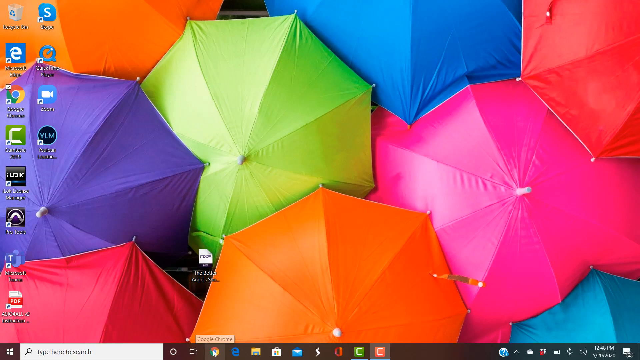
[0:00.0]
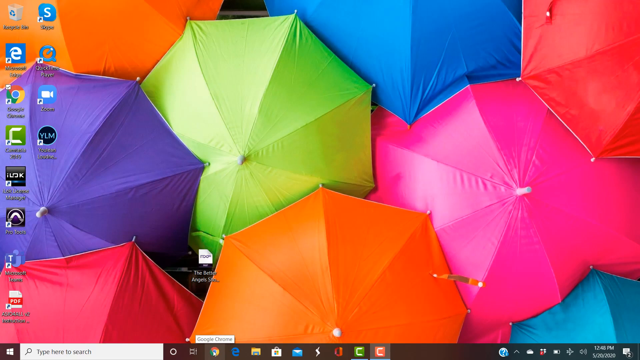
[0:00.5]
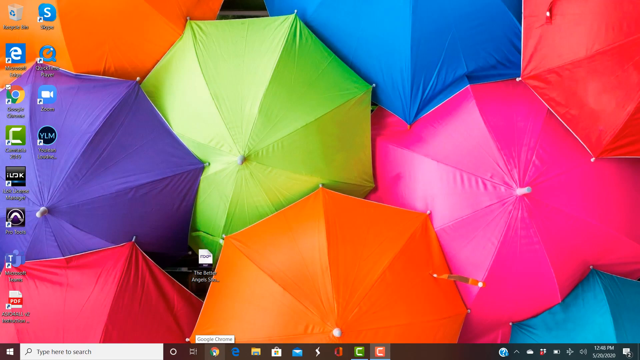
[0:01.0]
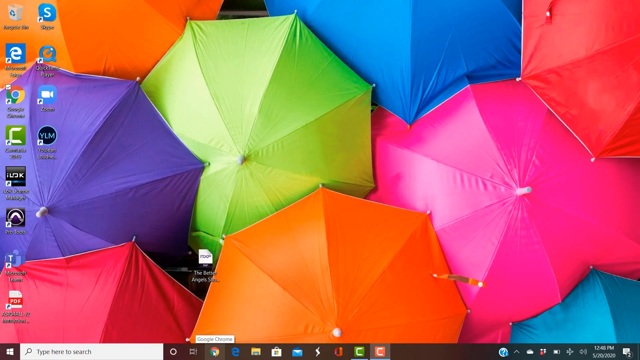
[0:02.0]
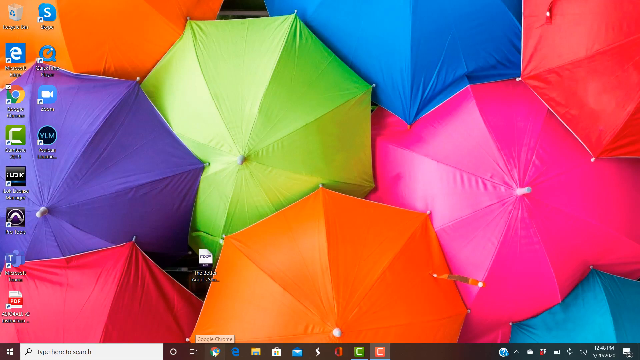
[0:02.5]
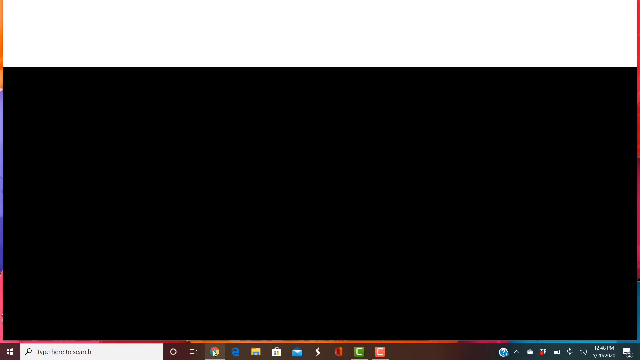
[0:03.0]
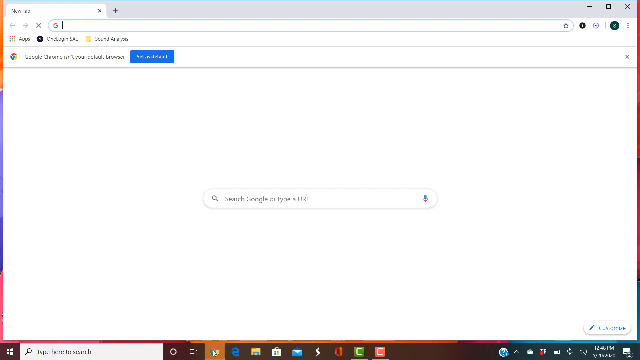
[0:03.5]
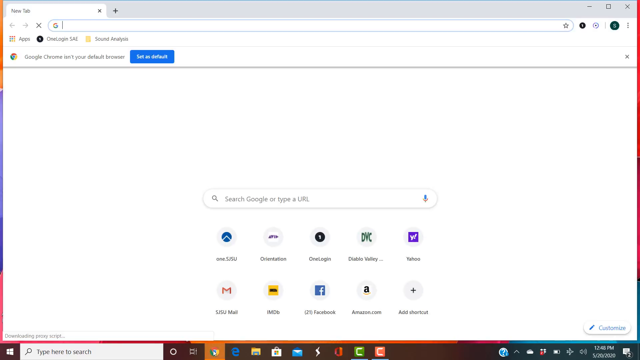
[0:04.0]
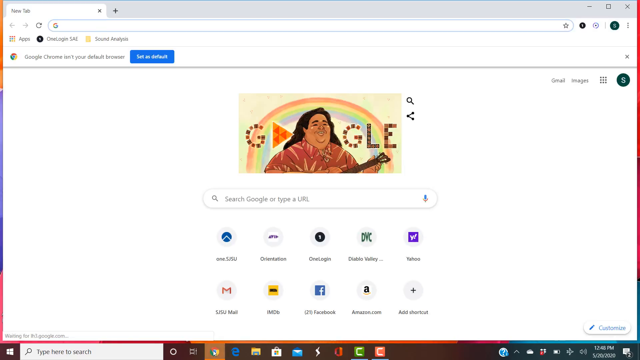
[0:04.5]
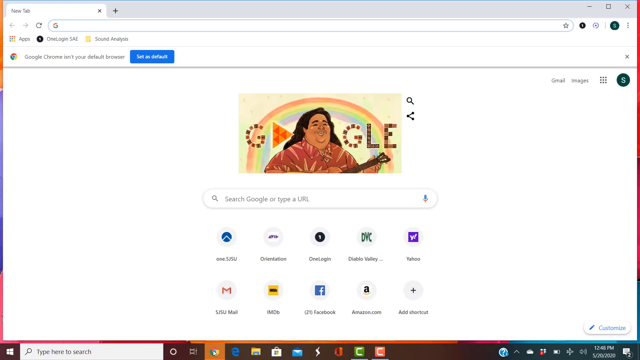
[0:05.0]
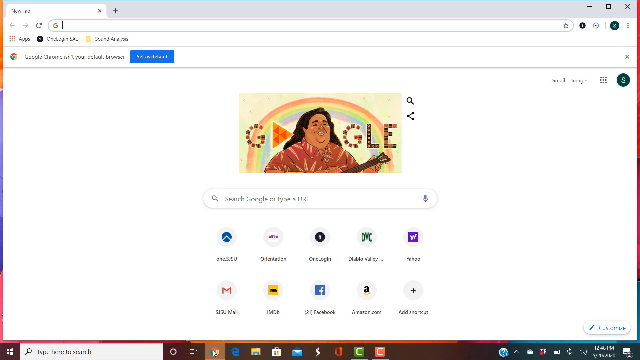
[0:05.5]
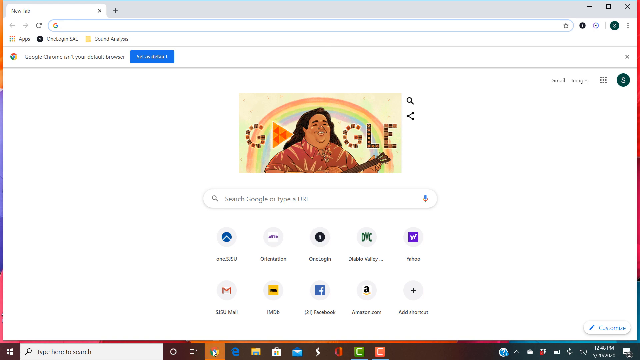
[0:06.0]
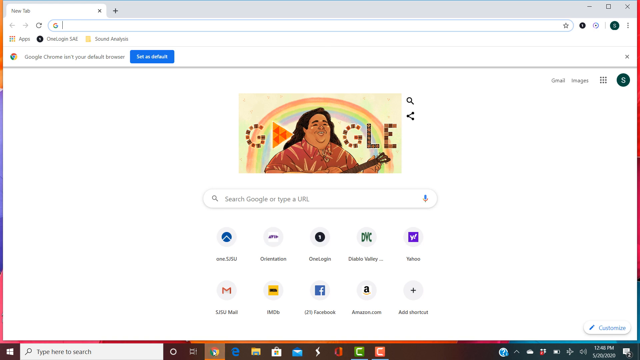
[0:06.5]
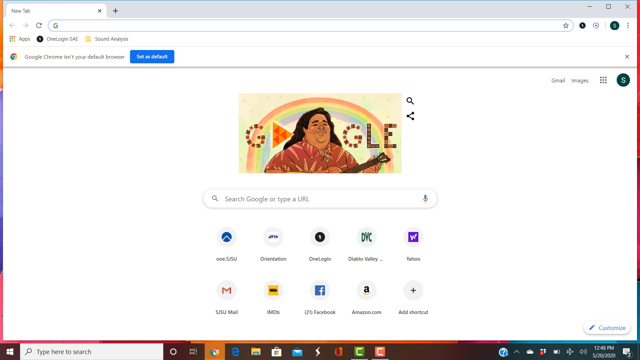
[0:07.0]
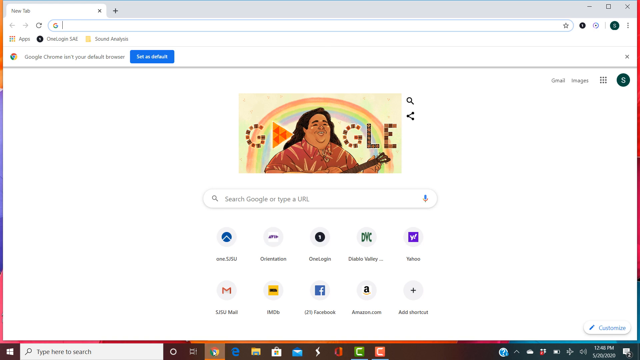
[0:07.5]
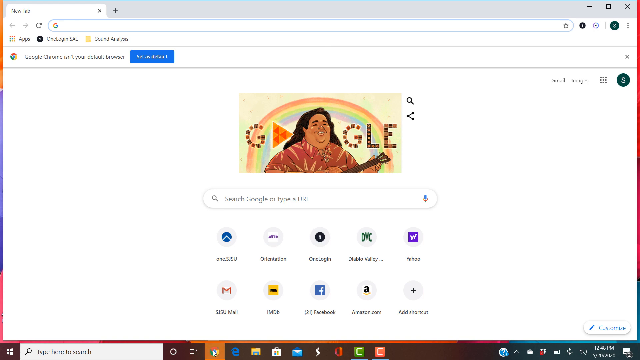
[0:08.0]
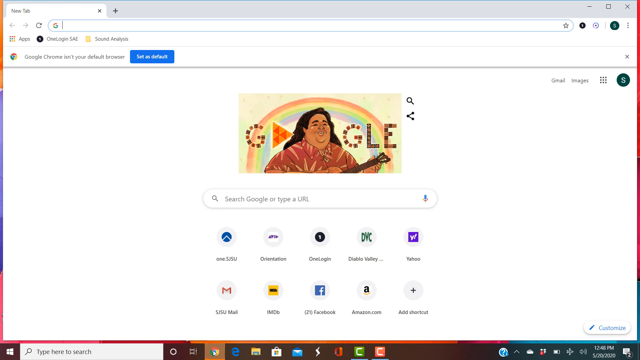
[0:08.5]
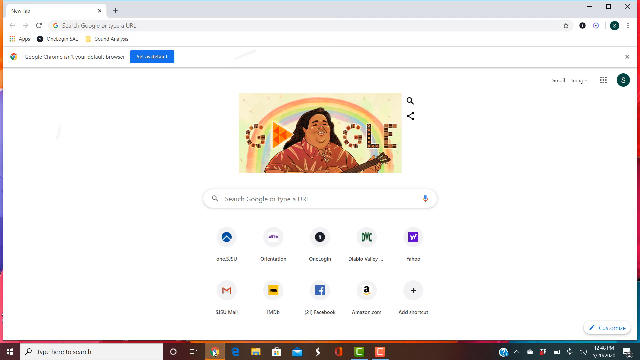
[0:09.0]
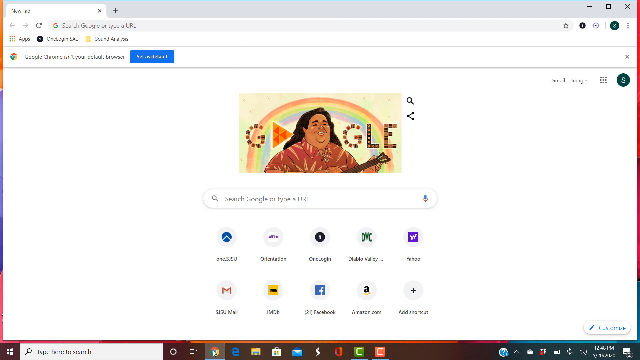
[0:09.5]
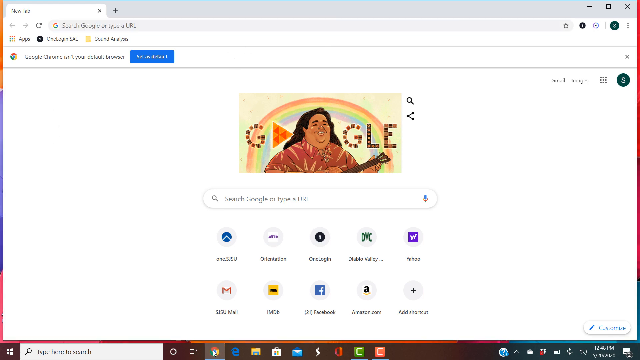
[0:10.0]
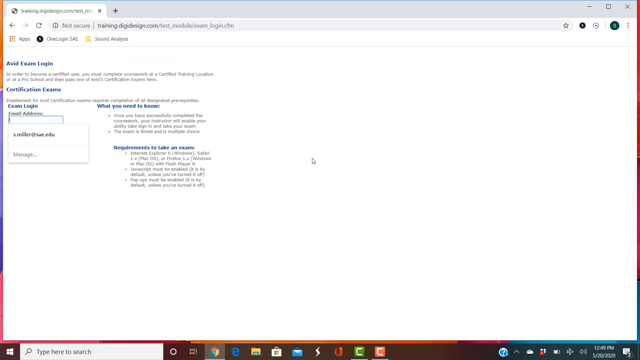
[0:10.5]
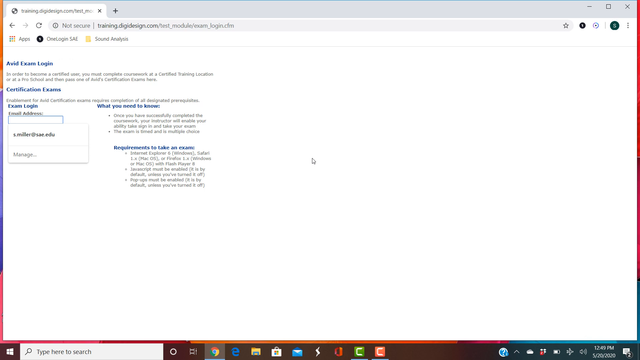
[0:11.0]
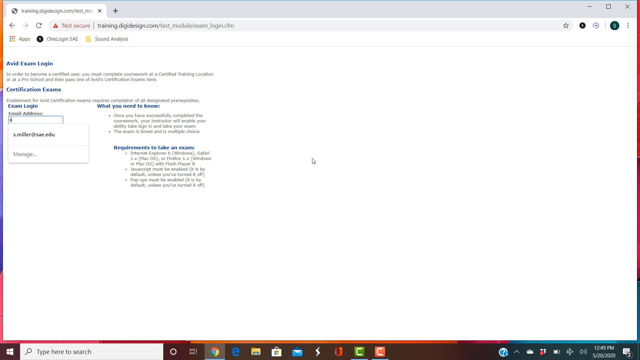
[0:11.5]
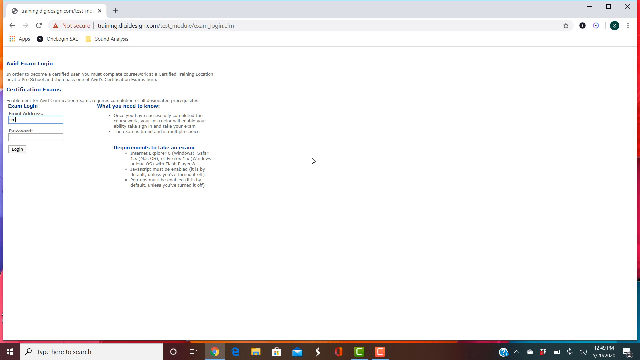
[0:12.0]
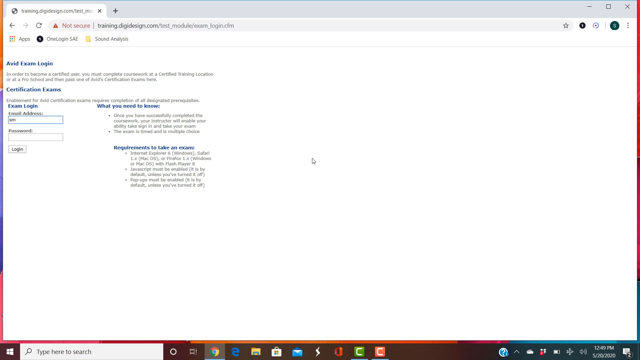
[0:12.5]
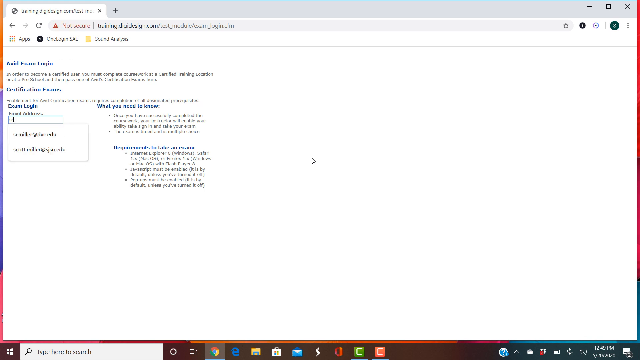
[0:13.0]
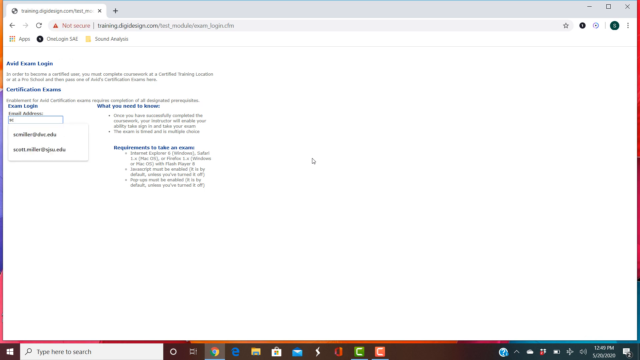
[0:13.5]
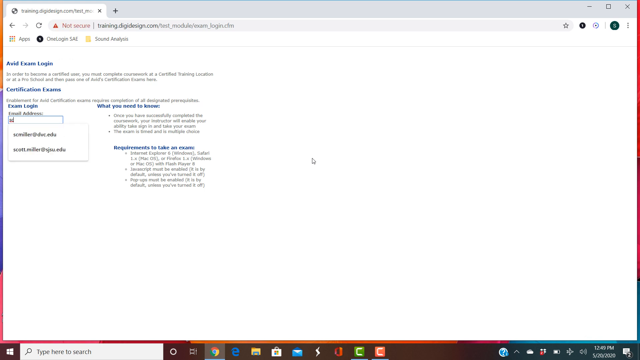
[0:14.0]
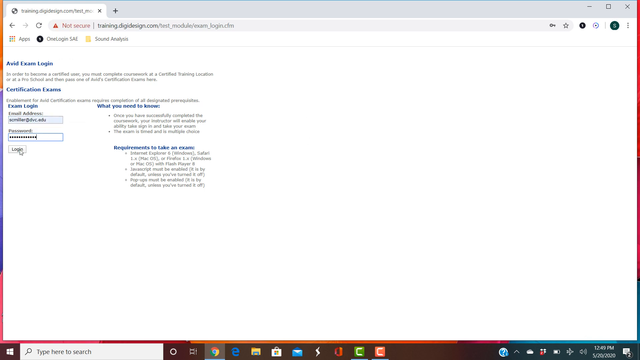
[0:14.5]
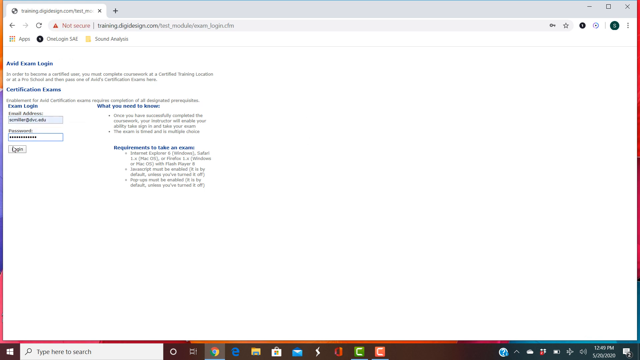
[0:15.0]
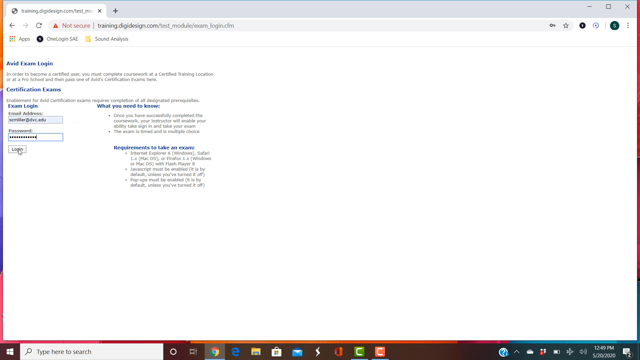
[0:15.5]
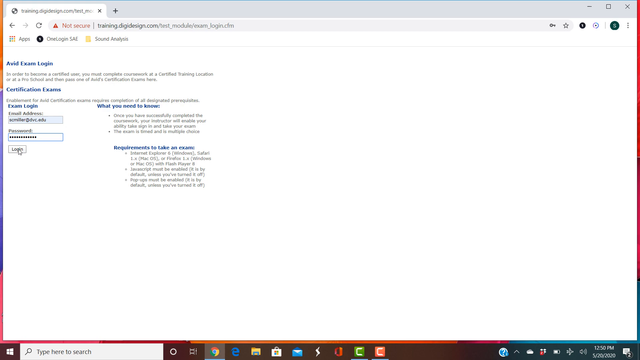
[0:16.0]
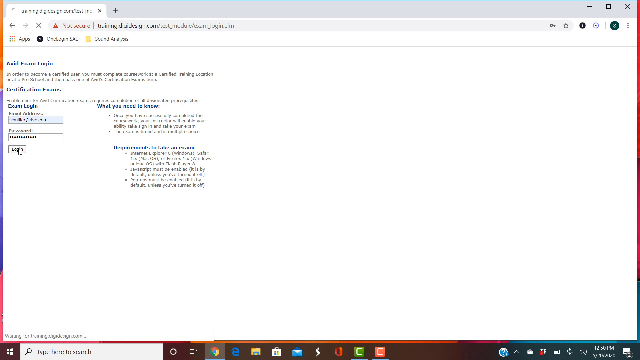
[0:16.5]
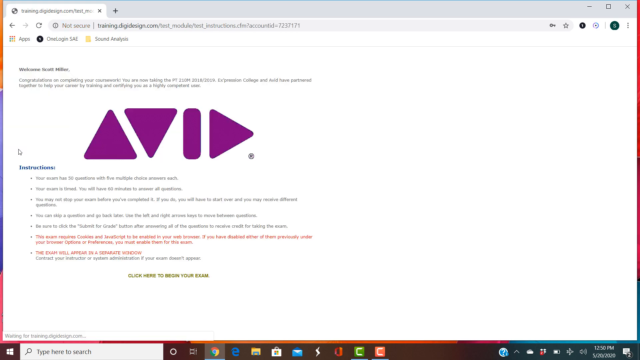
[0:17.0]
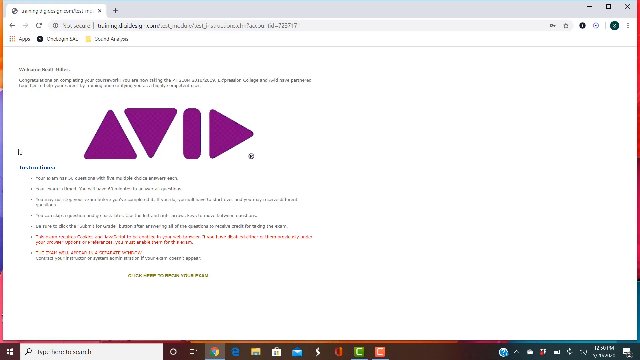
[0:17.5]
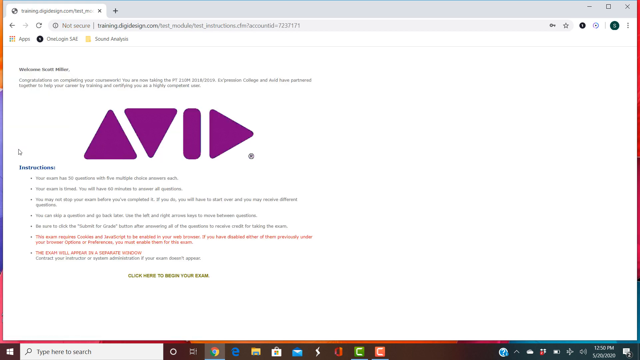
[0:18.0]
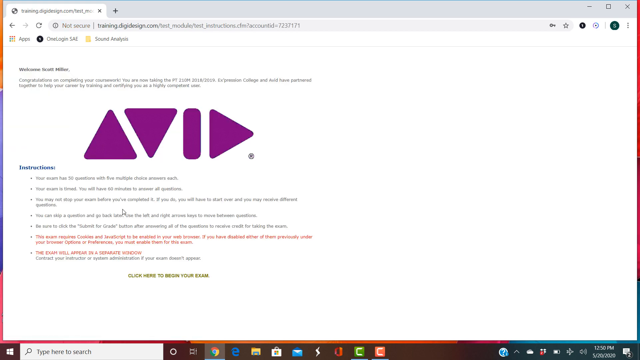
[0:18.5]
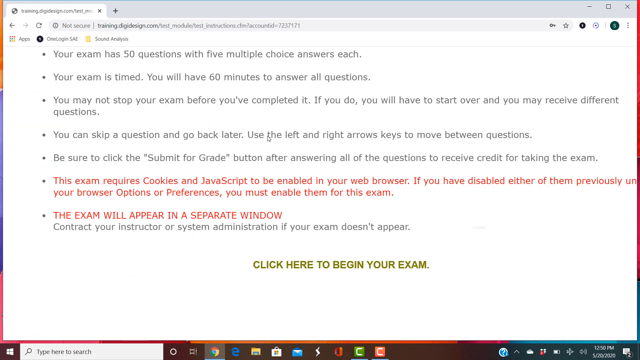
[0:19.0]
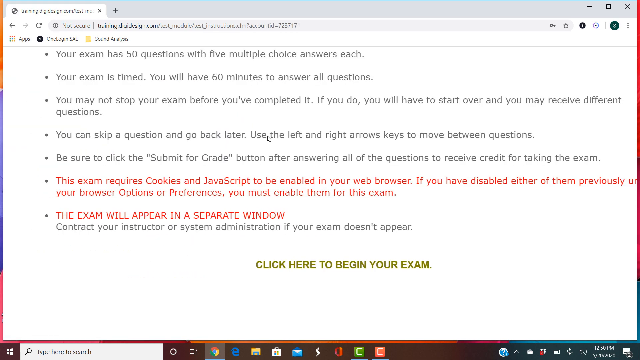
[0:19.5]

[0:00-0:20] A Windows computer screen is displayed, first showing the wallpaper on the home screen: umbrellas of different colors, opened and packed next to each other, with only their top parts visible. There is a green umbrella, a purple umbrella, an orange umbrella, another orange umbrella, a pink umbrella and a red umbrella. Apps are also on the home screen, including Google Chrome, Microsoft Edge or Internet Explorer, Skype, Recycle Bin and Zoom. The next screen shows the Google Chrome home page with the Google Doodle at the center. A new tab is opened and a search query is running. The person then logs in to a website, seemingly entering their own login details. The website requires a password and a username, and part of the screen shows purple triangles: one facing up, another facing down, and one standing in another triangle.